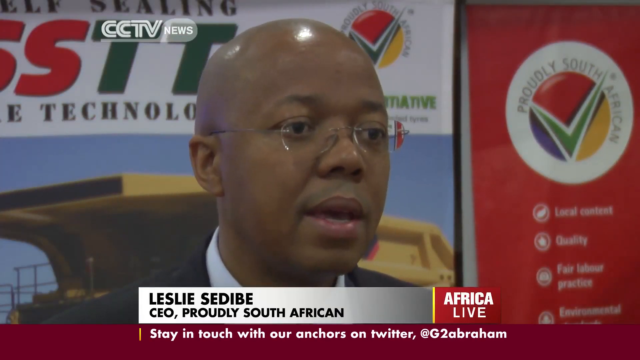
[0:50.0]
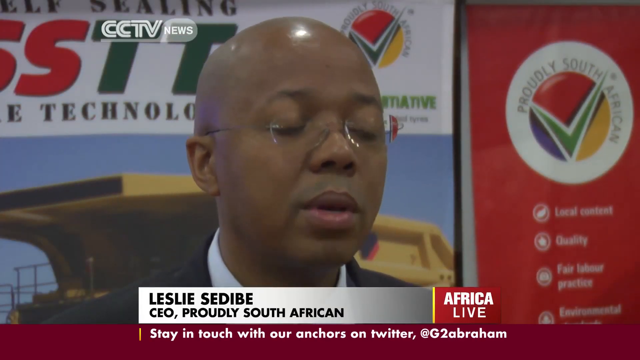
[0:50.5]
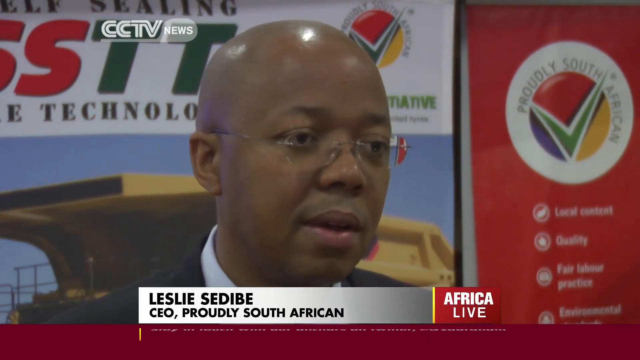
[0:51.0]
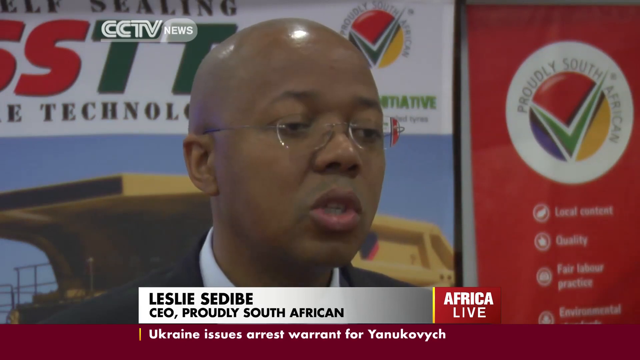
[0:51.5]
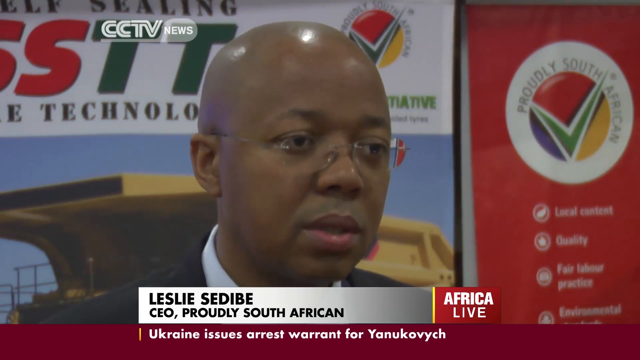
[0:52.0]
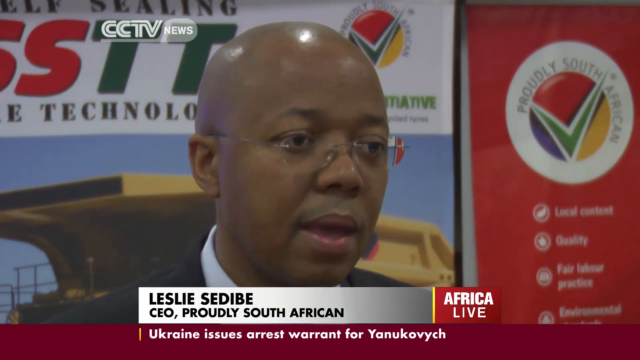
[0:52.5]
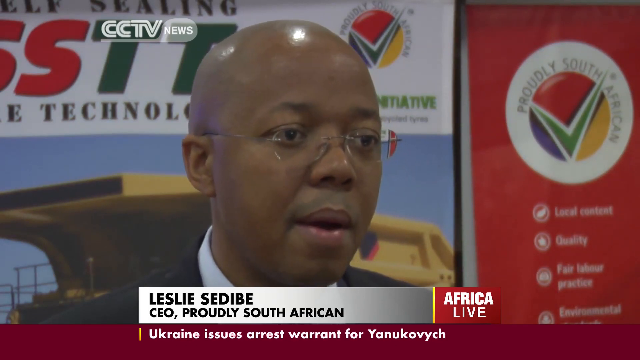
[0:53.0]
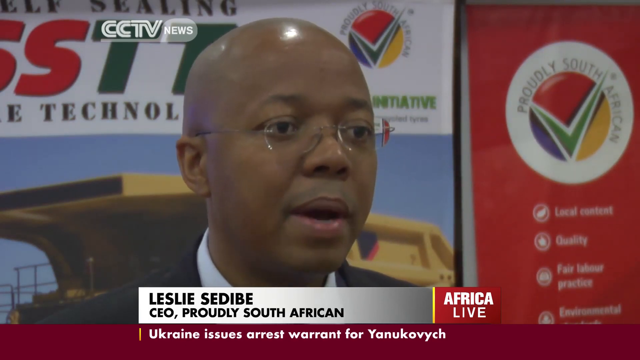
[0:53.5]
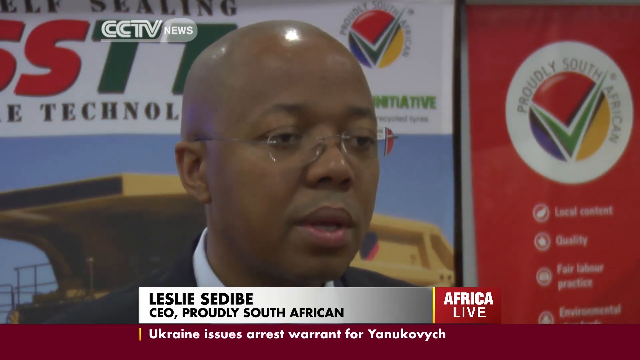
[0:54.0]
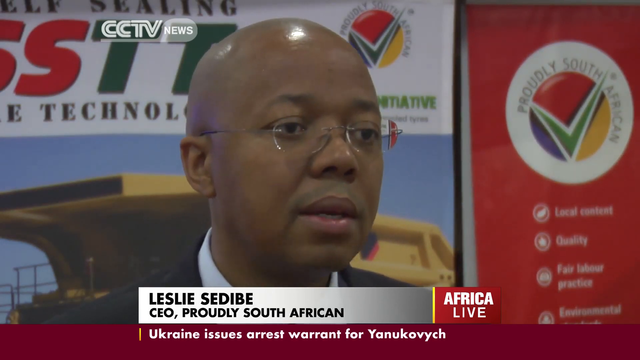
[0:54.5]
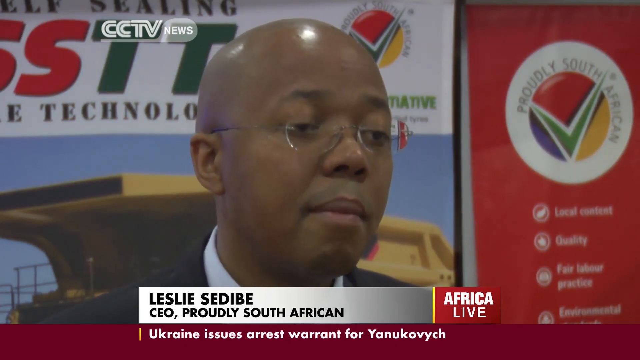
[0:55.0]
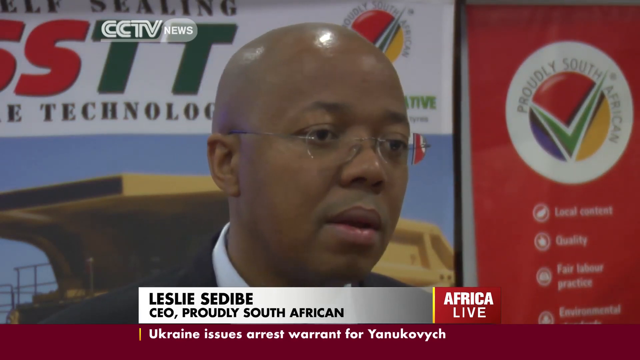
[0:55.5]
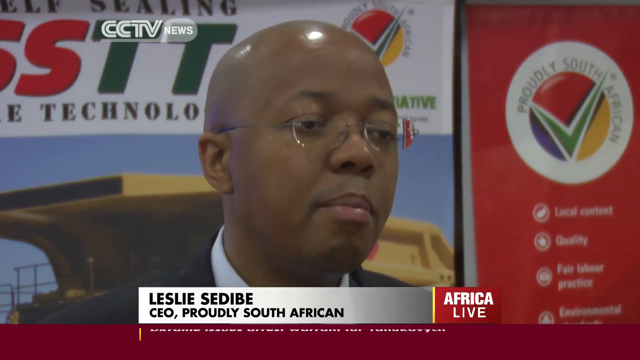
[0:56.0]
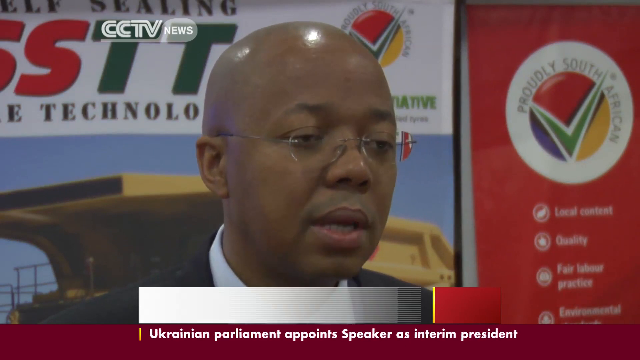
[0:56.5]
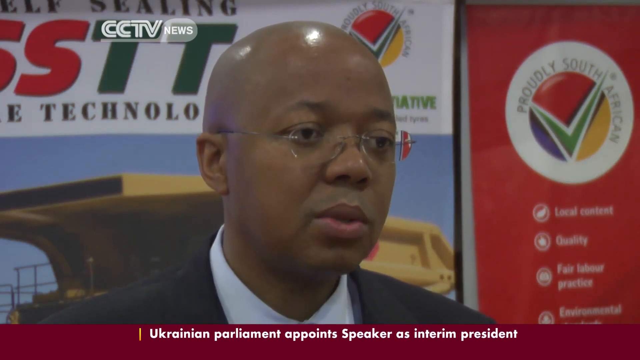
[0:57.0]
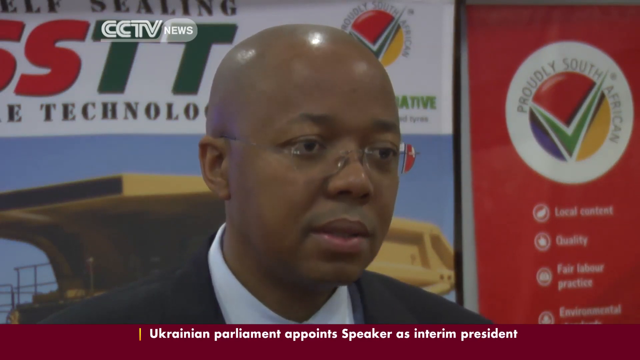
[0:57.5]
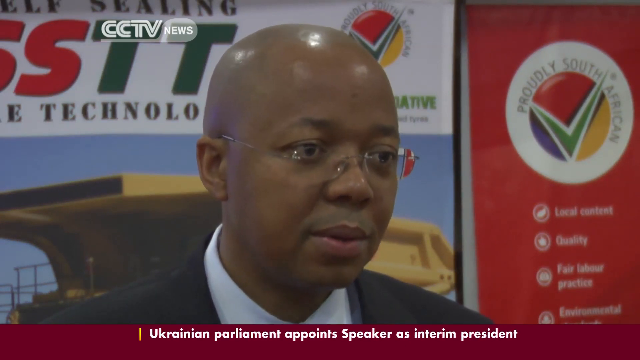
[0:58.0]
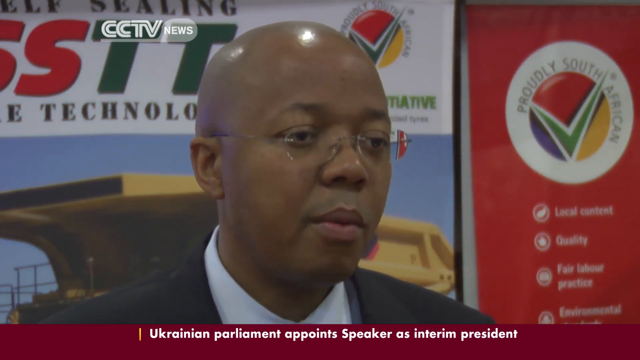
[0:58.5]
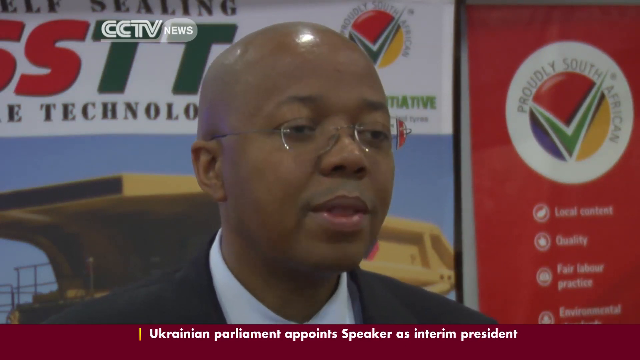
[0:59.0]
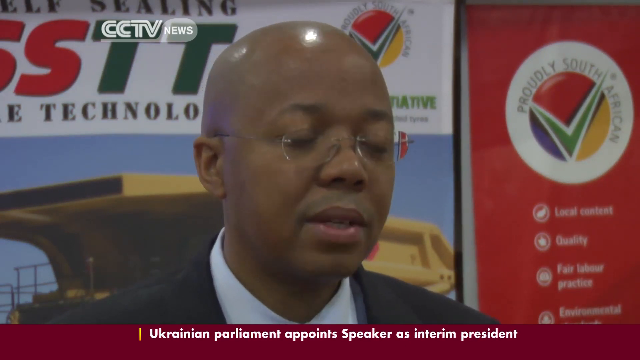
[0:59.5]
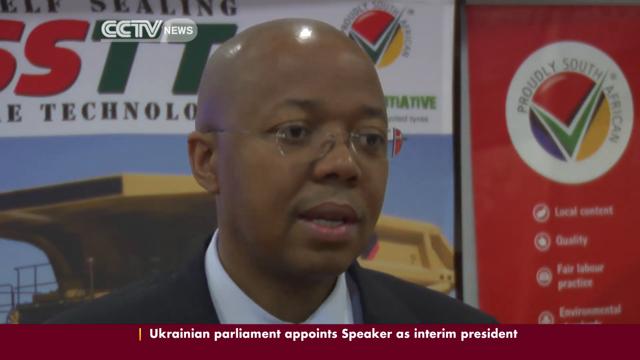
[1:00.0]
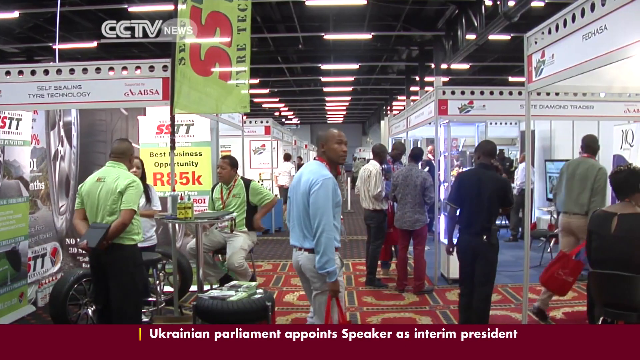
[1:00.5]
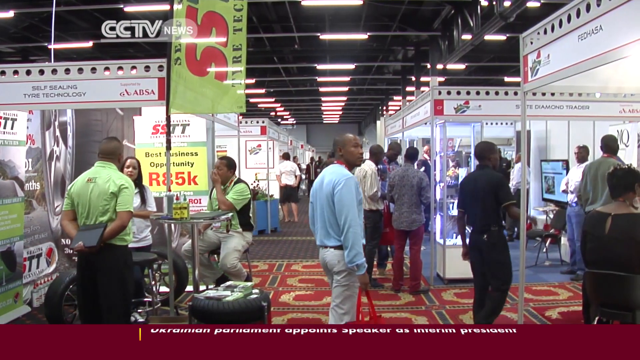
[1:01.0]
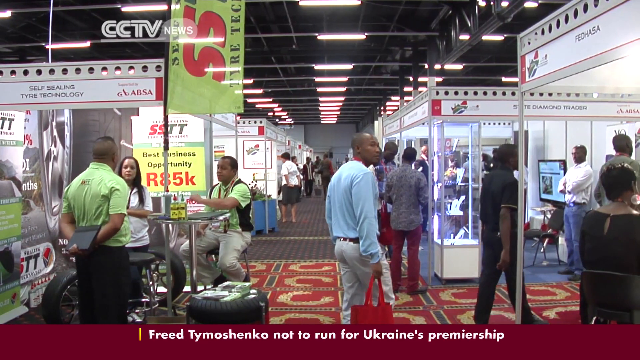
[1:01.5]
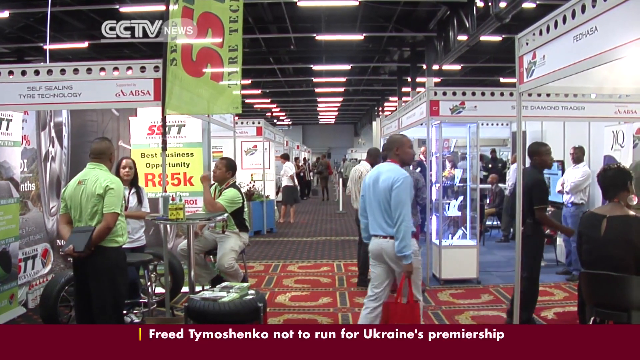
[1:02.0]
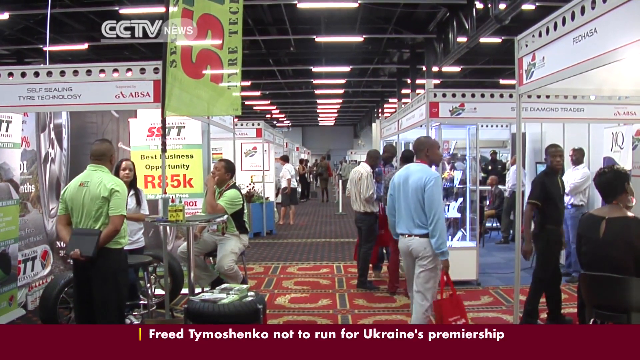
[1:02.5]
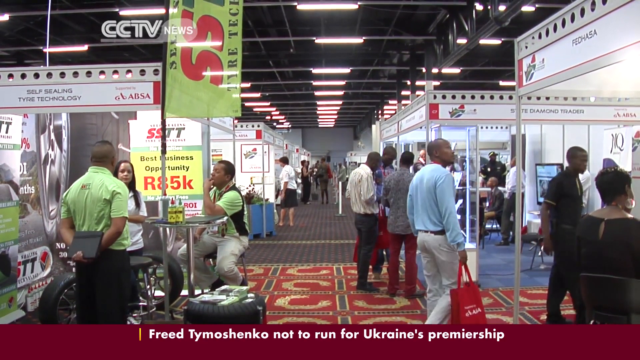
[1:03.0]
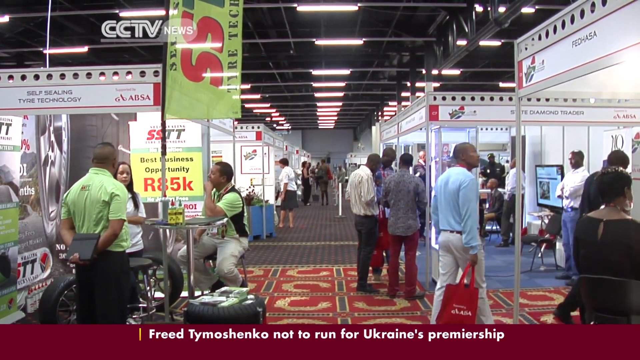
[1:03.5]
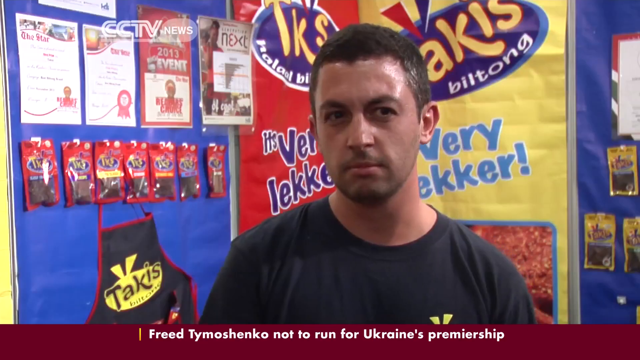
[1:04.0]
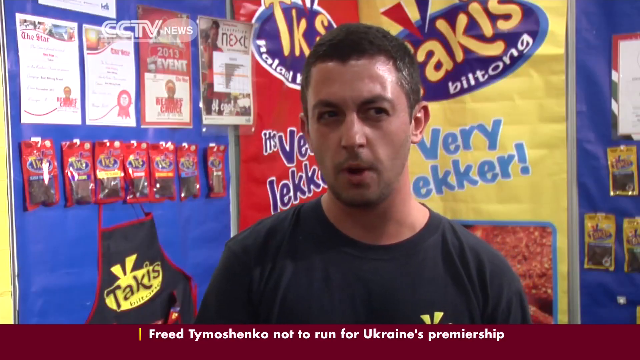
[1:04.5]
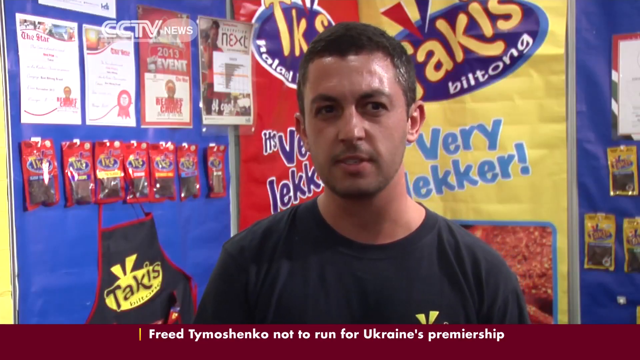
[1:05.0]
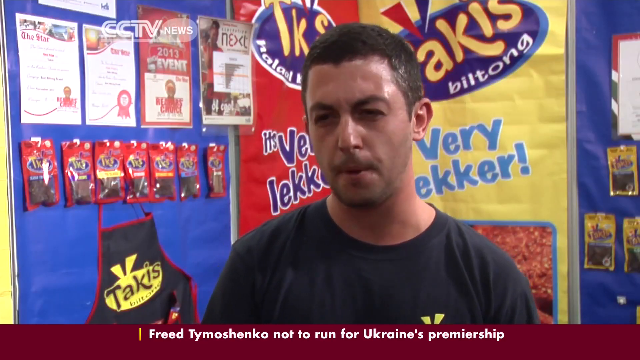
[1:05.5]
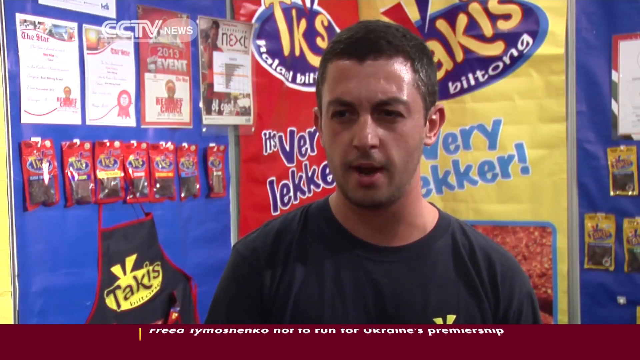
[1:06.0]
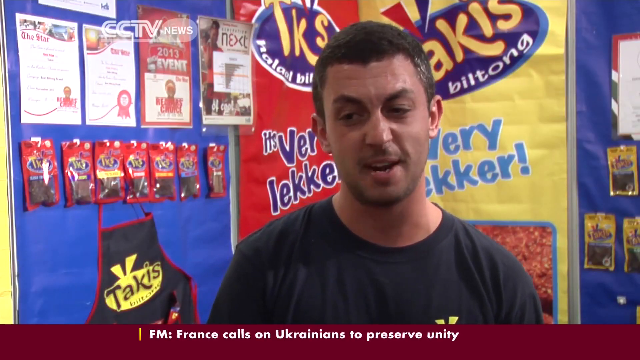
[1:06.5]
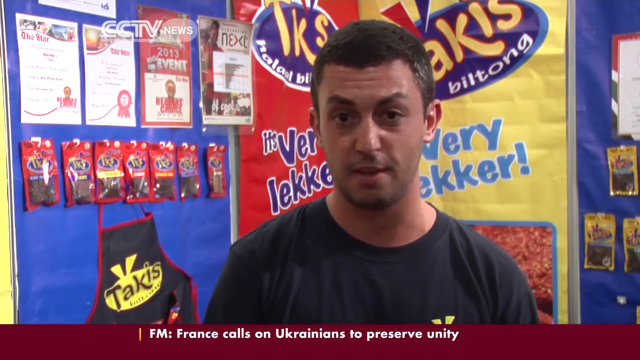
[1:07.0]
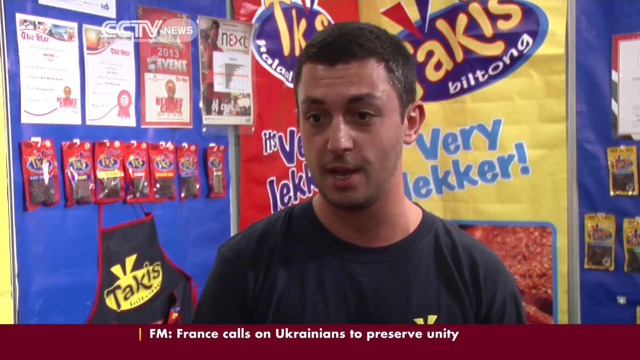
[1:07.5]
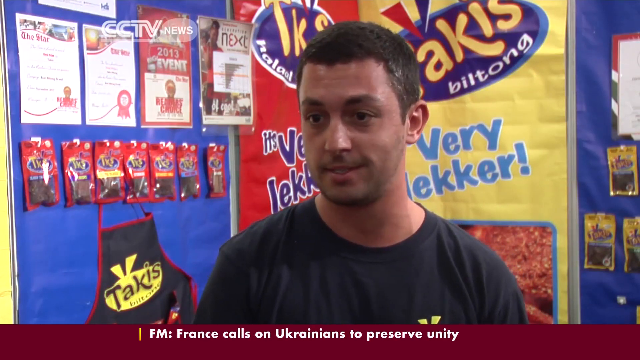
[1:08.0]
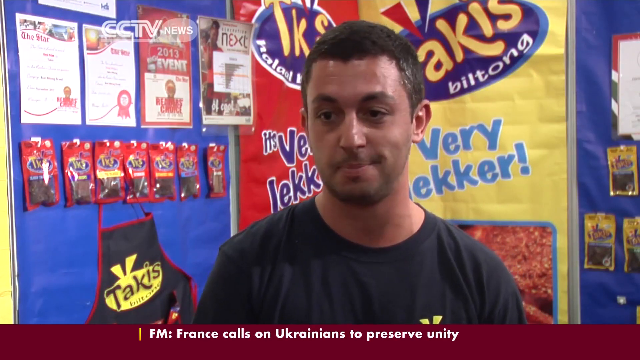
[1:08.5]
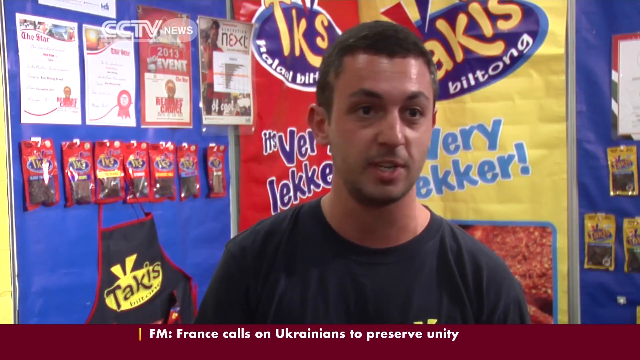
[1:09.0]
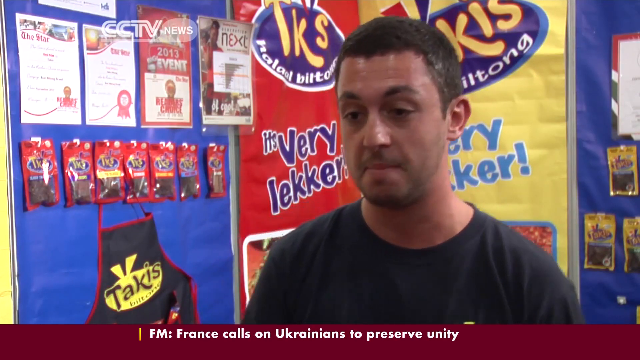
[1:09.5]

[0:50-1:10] The African American man is named Leslie, probably spelled S-E-D-I-V-E-S-E-E-O, and is South African. There are shops, apparently each in its own little booth, seemingly selling things at some sort of auction or convention. Another man comes on screen, maybe Caucasian, wearing a black shirt. Text reads "takis" (T-A-K-I-S), maybe what he is selling at his booth, and there is a lot of product behind him. This man, Torsten, is the CEO of Proudly South African, though he looks like a vendor selling his product.